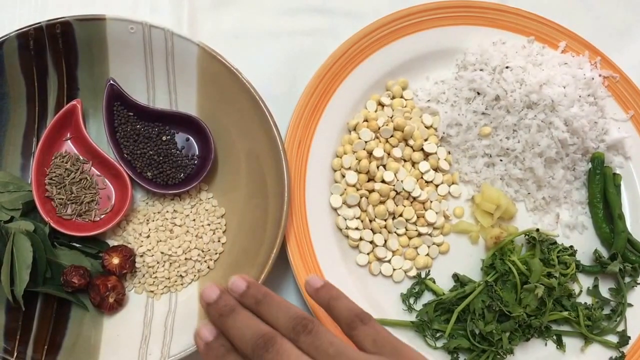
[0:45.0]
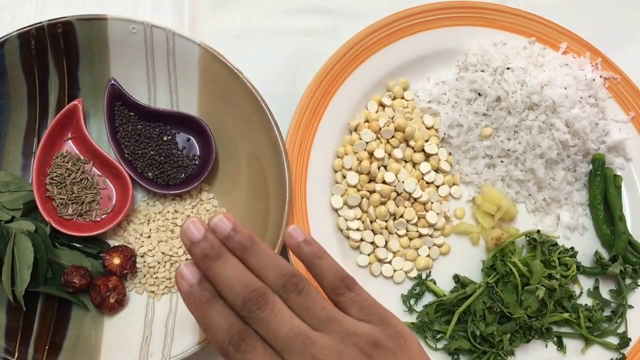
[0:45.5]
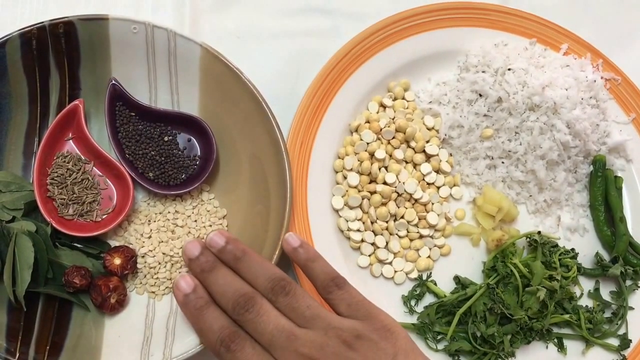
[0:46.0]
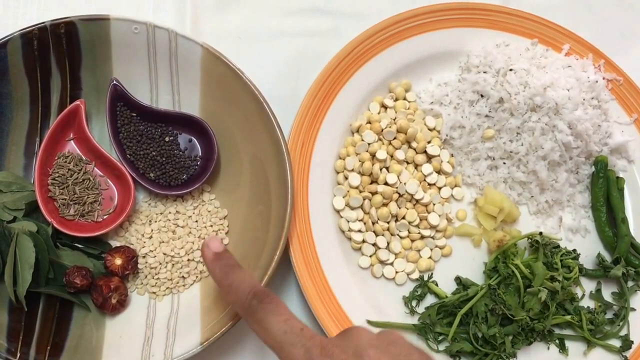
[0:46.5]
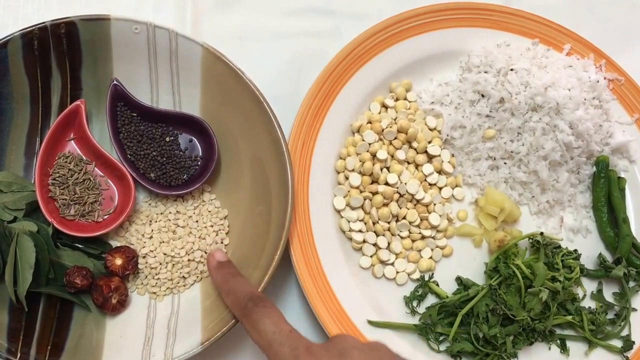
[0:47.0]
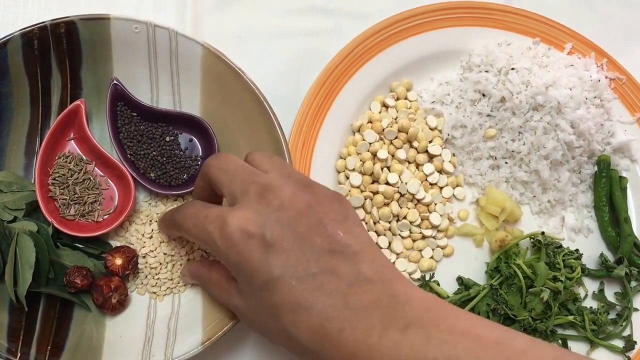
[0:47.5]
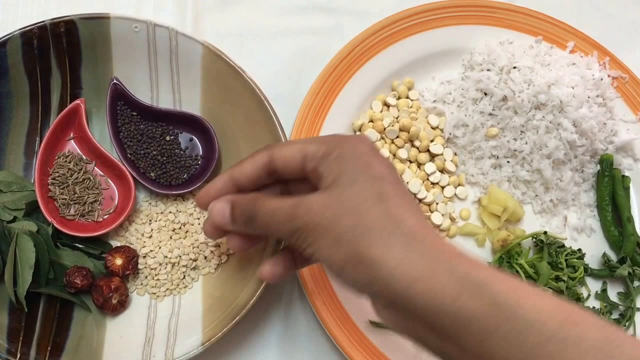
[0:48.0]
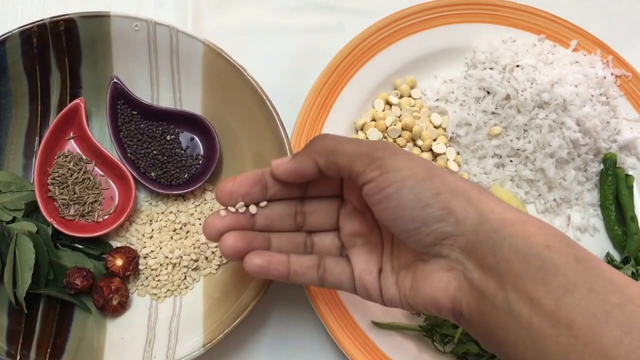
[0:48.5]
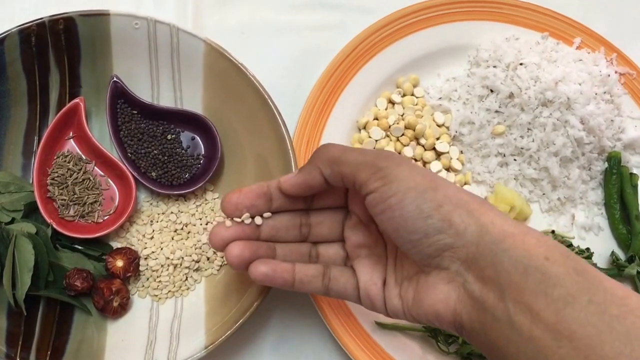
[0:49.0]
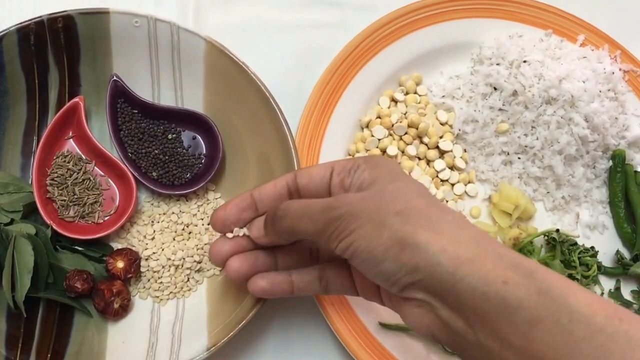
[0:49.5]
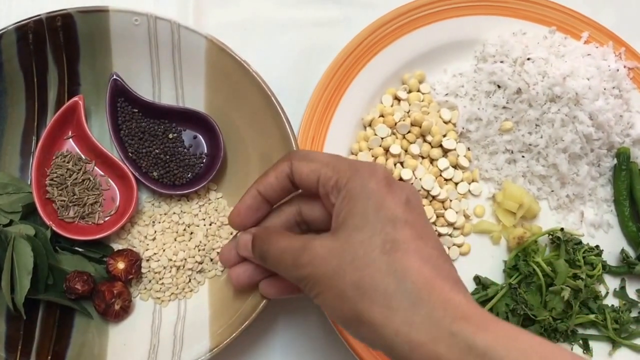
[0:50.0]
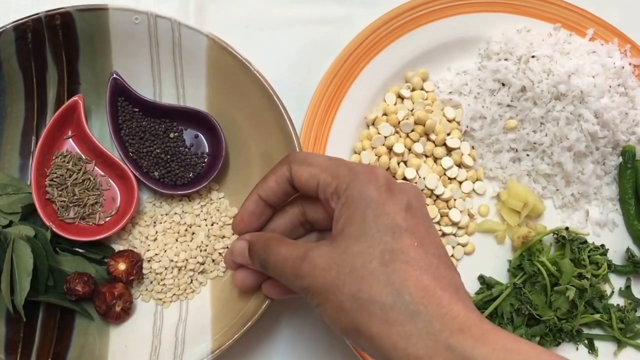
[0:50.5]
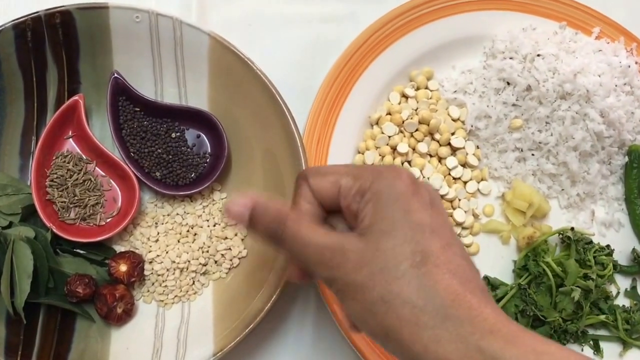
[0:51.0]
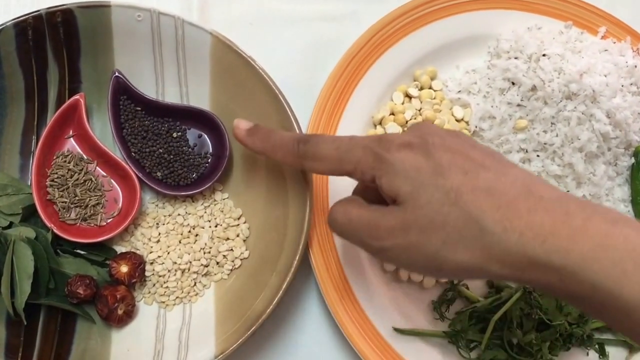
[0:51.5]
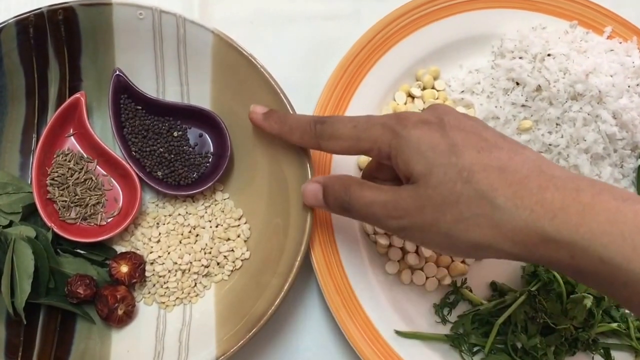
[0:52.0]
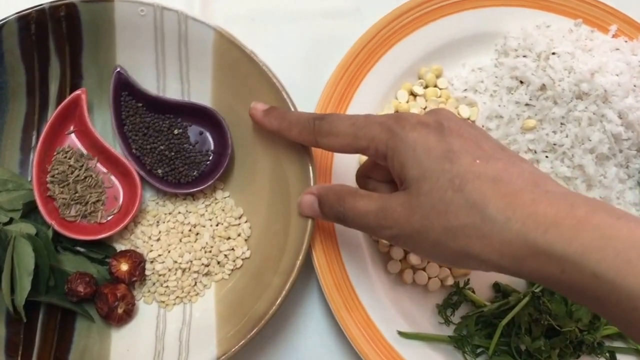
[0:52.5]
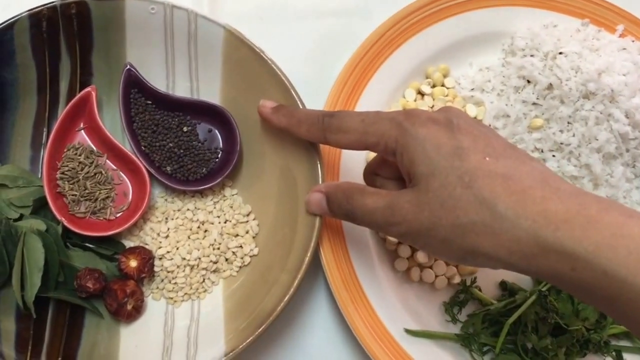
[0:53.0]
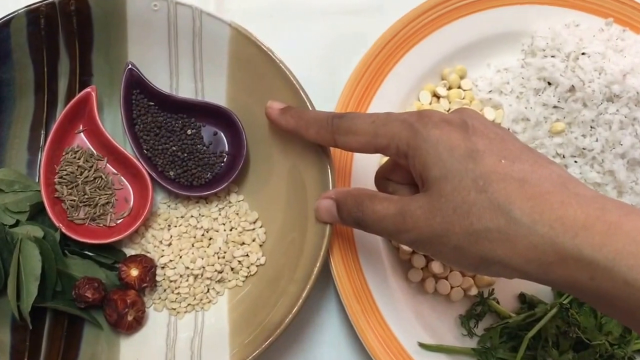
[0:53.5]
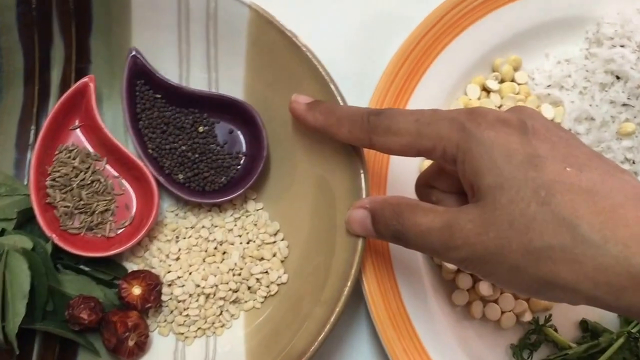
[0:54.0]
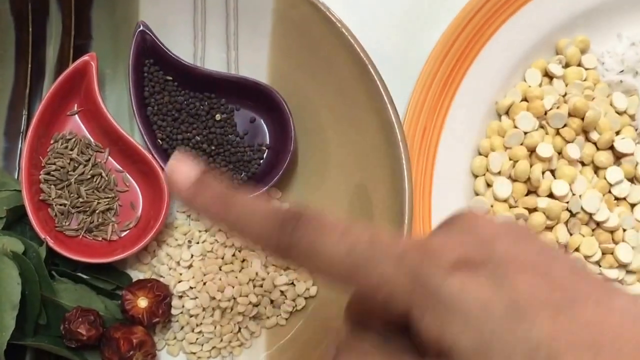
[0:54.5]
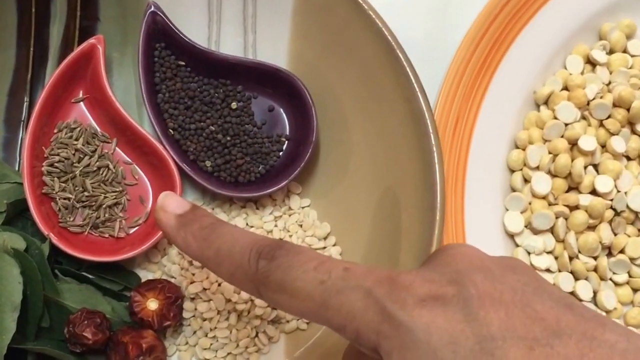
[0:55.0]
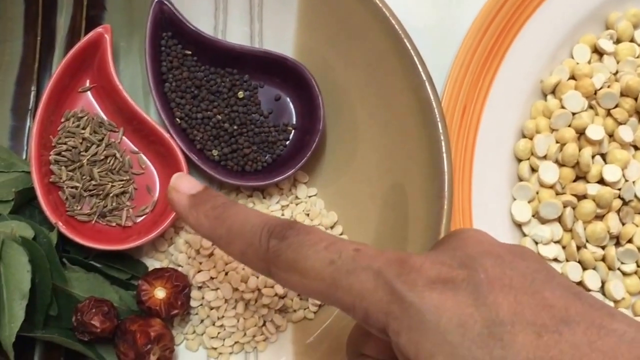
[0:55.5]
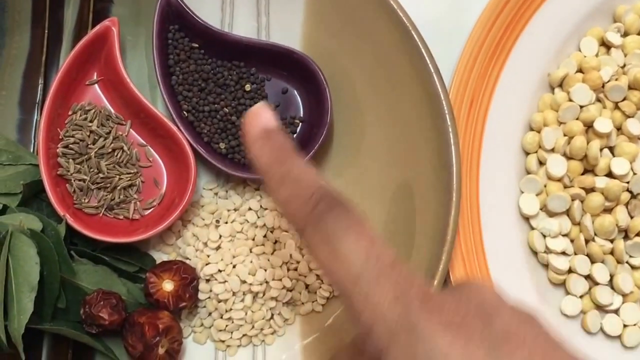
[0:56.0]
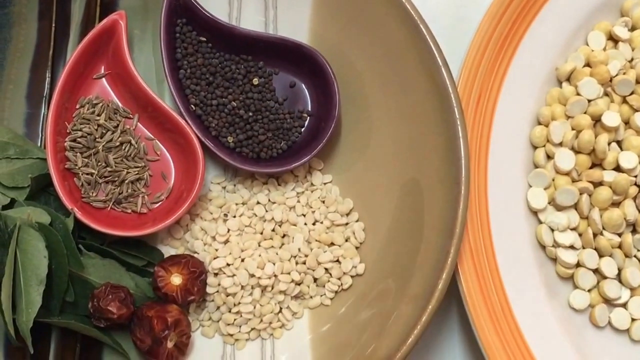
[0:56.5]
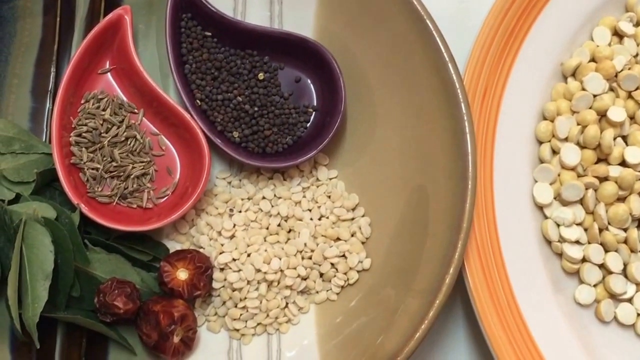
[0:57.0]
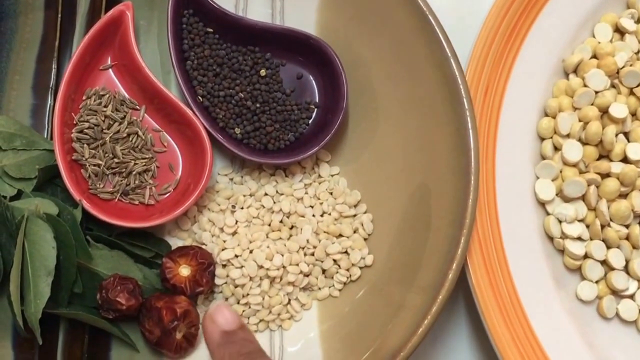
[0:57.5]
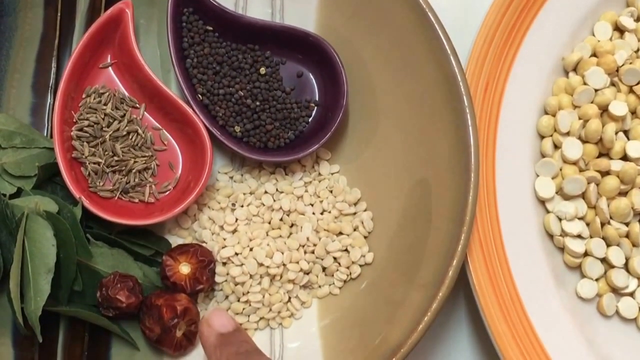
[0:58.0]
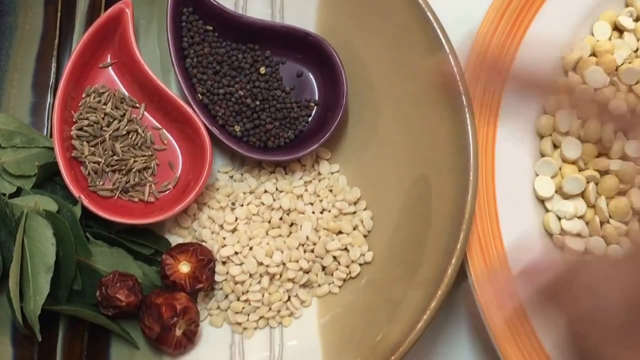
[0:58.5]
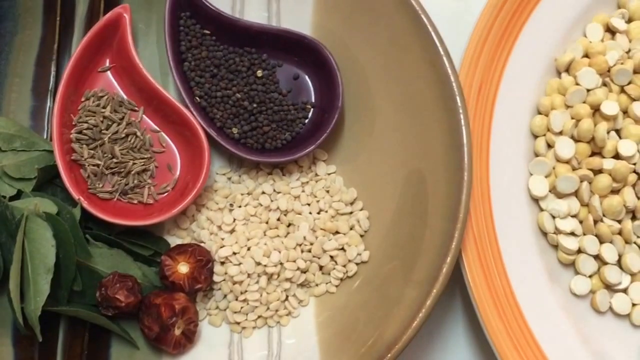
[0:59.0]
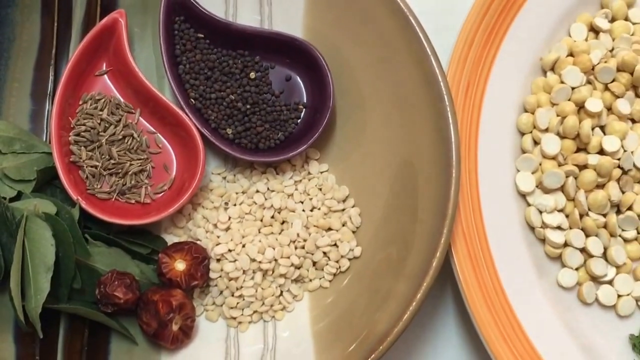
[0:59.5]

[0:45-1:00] The ingredients for a coriander chutney are laid out as a mise en place, spread between two plates with about four to five ingredients on each, and all of the ingredients on the left plate are visible. One plate holds black peppercorns, what appear to be sage or possibly bay leaves, and coriander. The other plate has dried lentils, cilantro, shredded white coconut, and possibly a scallion or chive, some sort of green, possibly a green onion. The ingredients look fresh.